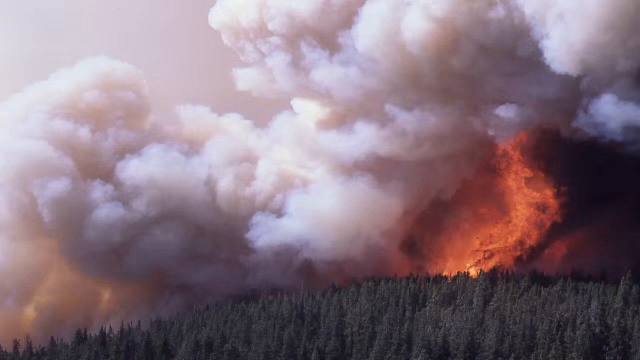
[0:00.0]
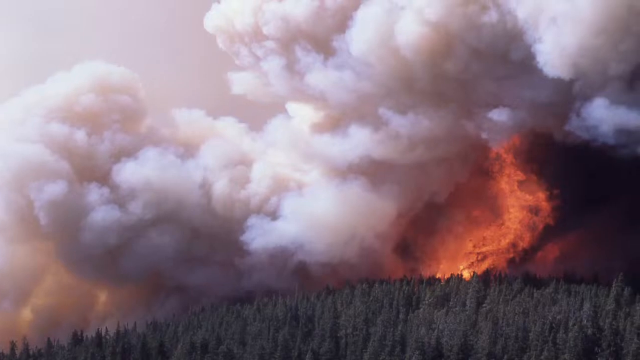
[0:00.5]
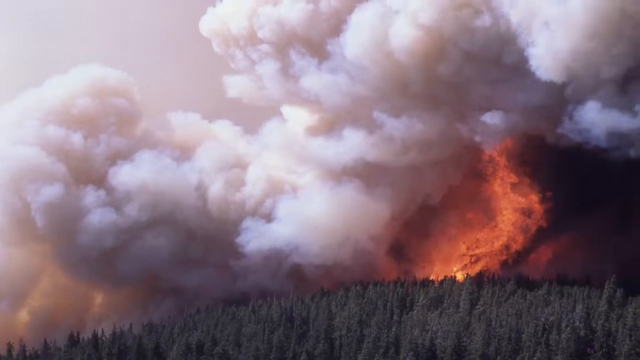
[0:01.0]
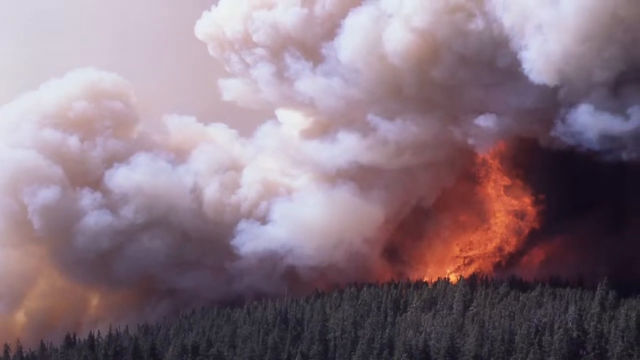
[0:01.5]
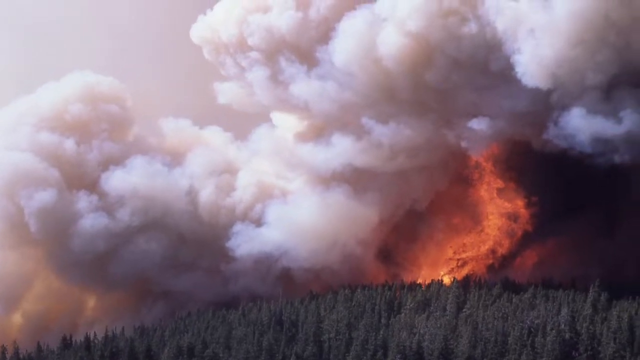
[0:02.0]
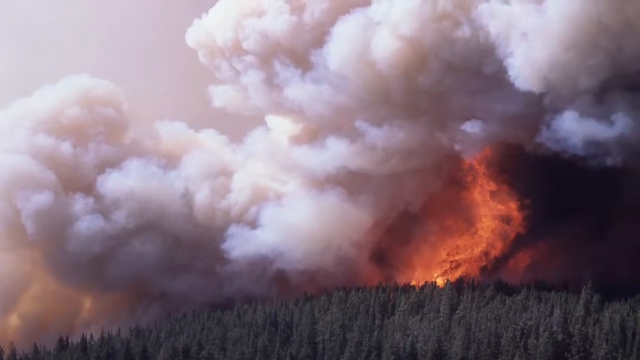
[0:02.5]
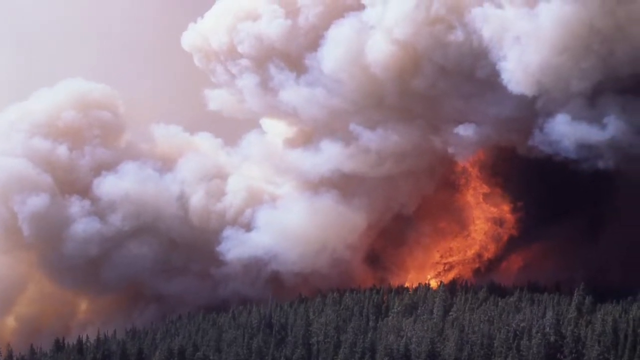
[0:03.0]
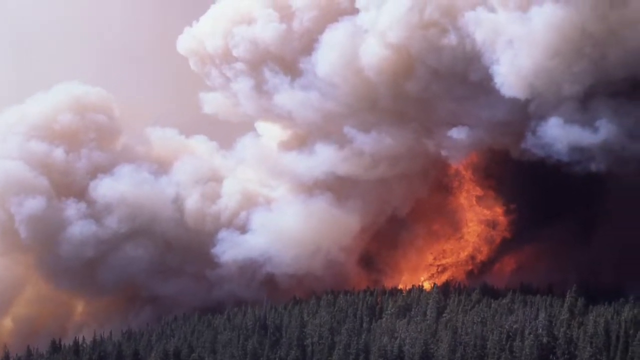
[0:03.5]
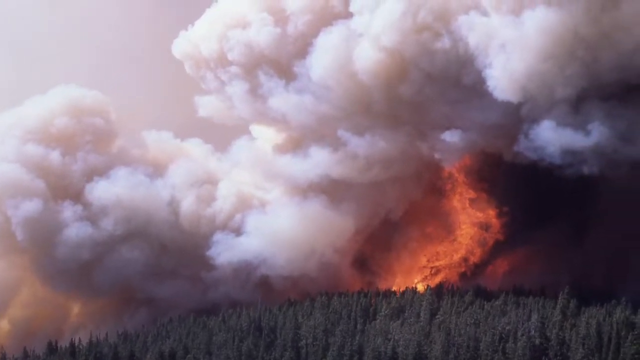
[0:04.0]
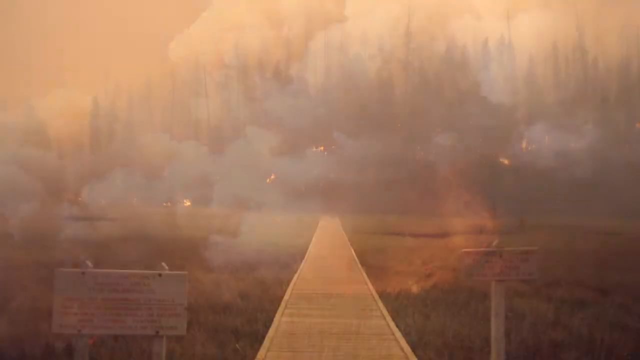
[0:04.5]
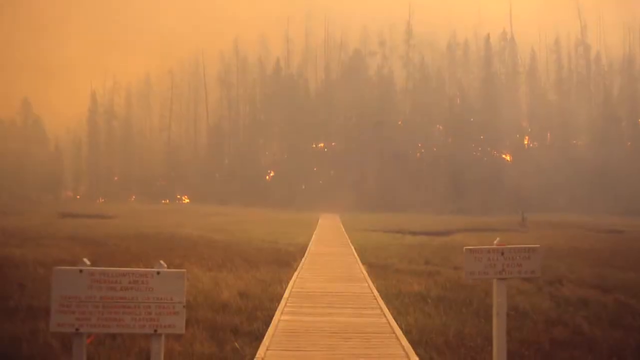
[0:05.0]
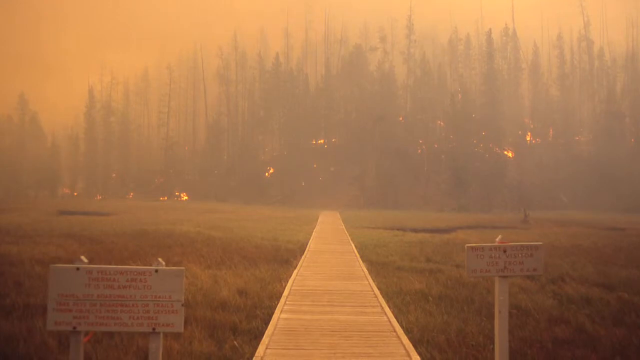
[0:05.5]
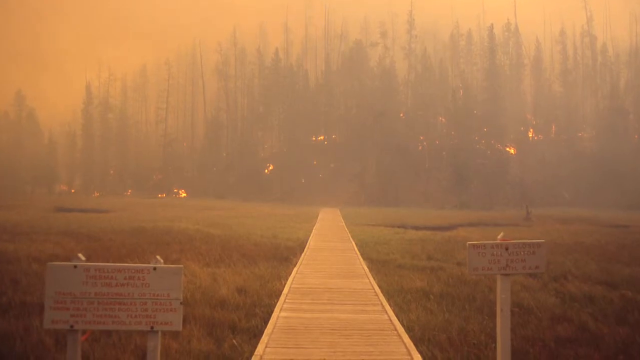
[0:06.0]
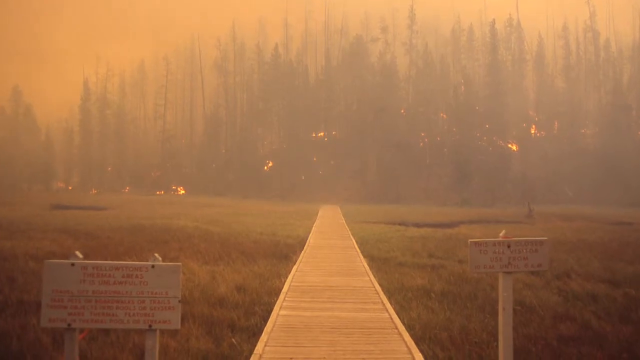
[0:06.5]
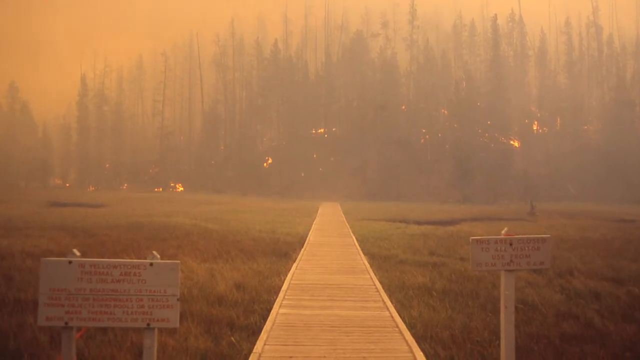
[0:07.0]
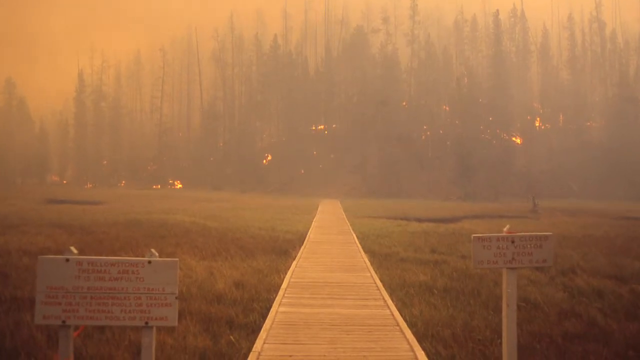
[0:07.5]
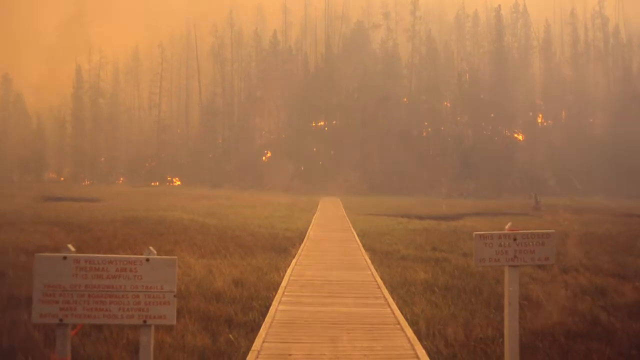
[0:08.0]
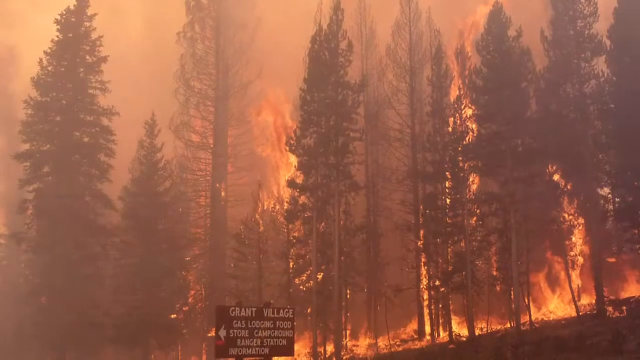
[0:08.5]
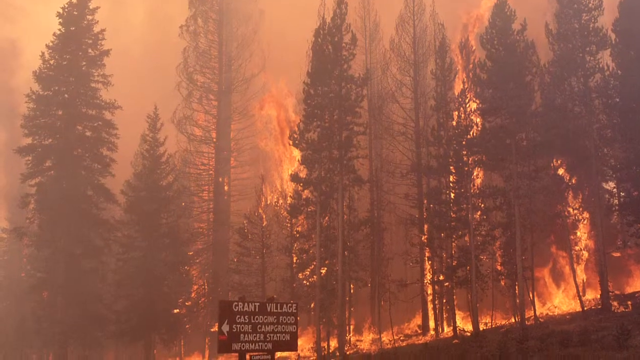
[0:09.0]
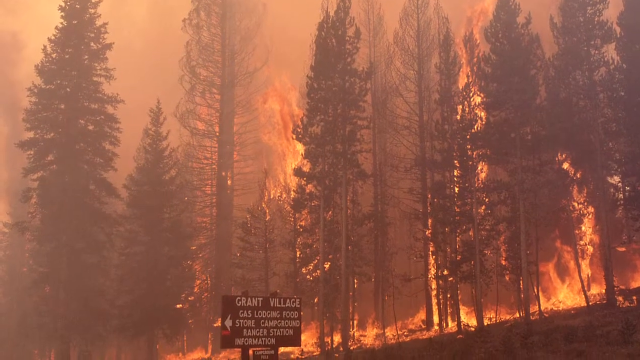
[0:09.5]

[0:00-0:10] A forest is burning, with many trees at the bottom of the frame and fire billowing on the right side, while clouds of smoke rise above the fire. The camera pans to the right, and there is a still image of the fire. Suddenly the image changes to what looks like a dock or some kind of runway in the middle of grasslands; behind the grasslands the forest is burning, with some of the fire burning behind the trees, and there is fog and smoke everywhere. Closer to the camera are two signs whose text is not readable. The scene then changes to a closer shot of the trees, with fires raging between them. Beneath the trees is a sign that says "Grand Village Gas Lodging" along with some other information. The area looks like some kind of park, possibly a national park, because it looks very large, and the fire is decimating the trees.